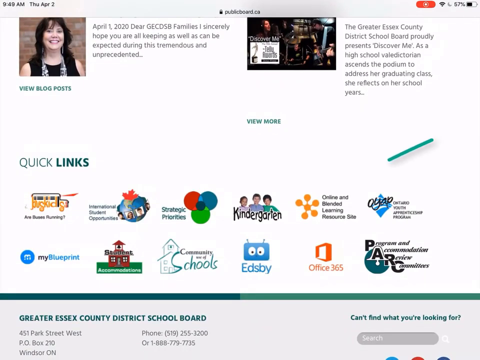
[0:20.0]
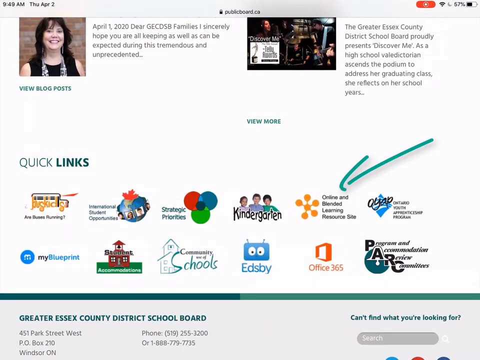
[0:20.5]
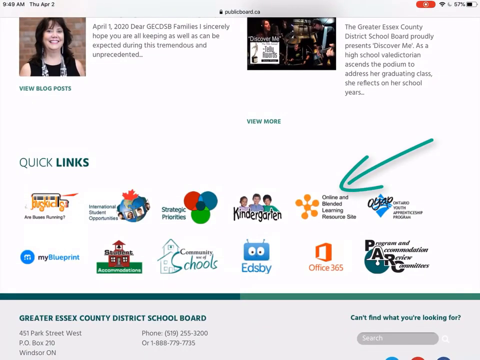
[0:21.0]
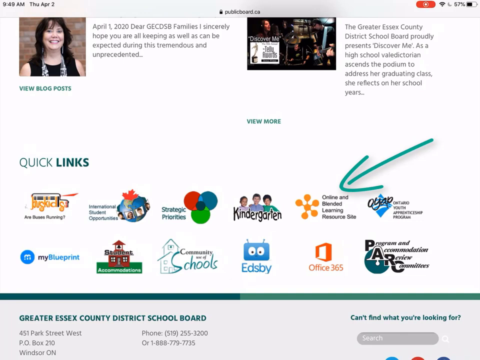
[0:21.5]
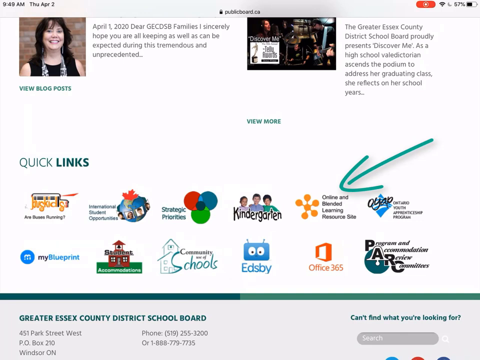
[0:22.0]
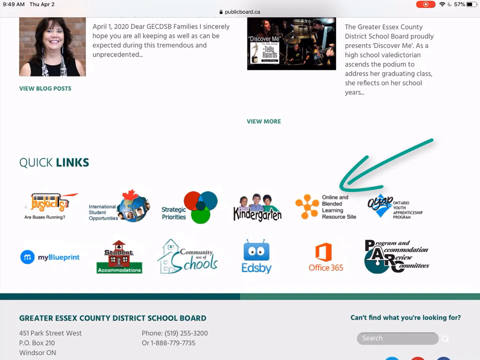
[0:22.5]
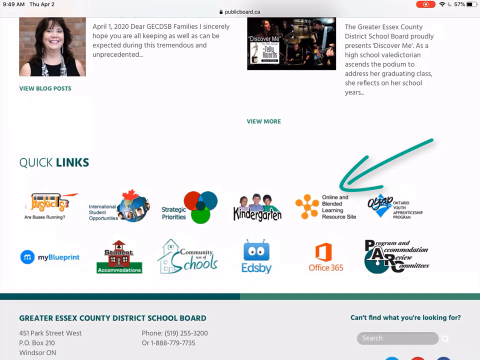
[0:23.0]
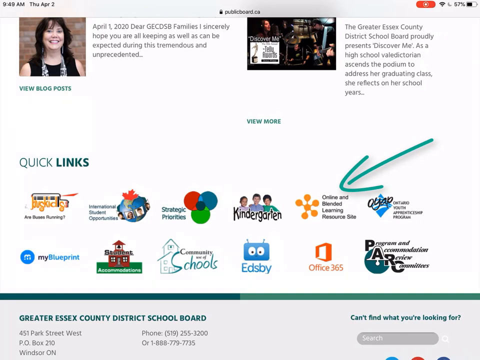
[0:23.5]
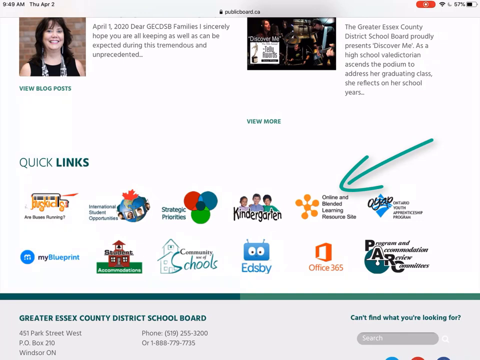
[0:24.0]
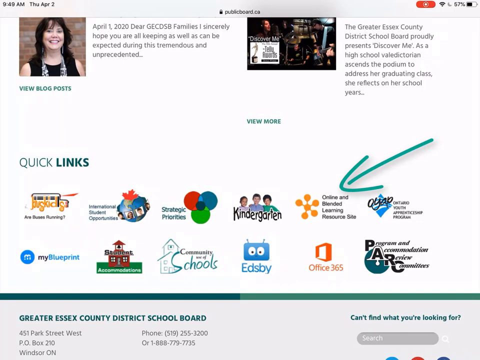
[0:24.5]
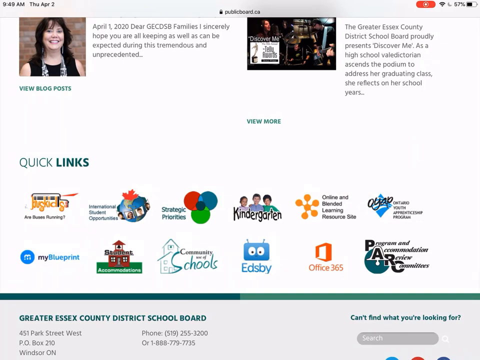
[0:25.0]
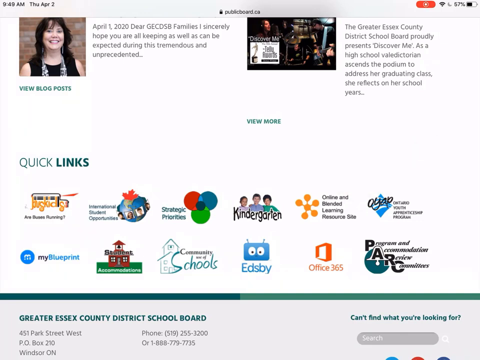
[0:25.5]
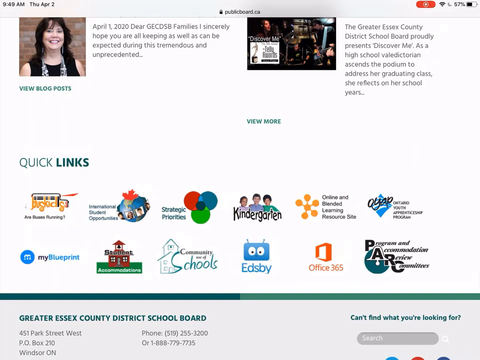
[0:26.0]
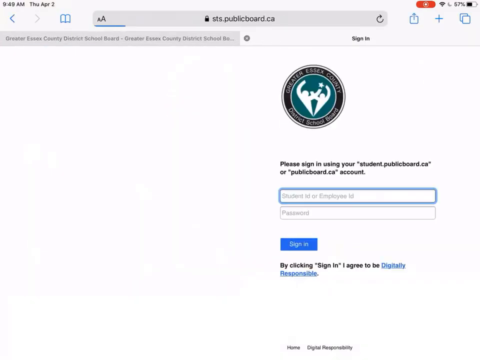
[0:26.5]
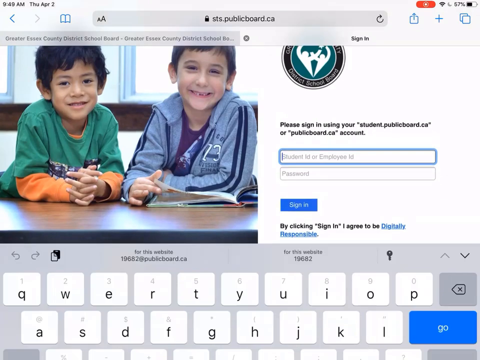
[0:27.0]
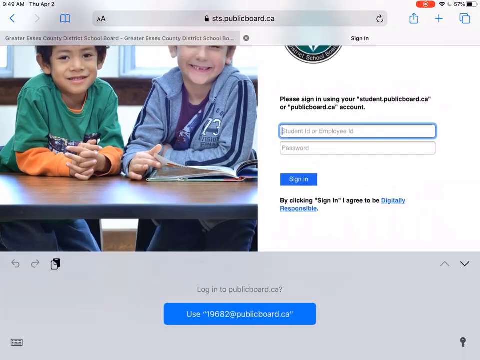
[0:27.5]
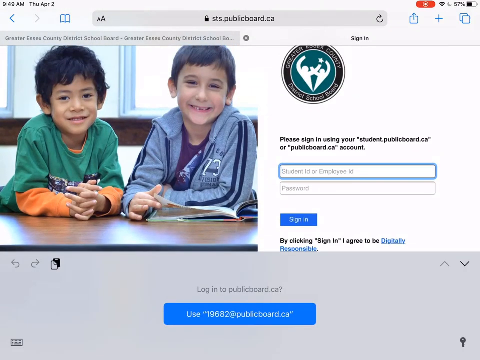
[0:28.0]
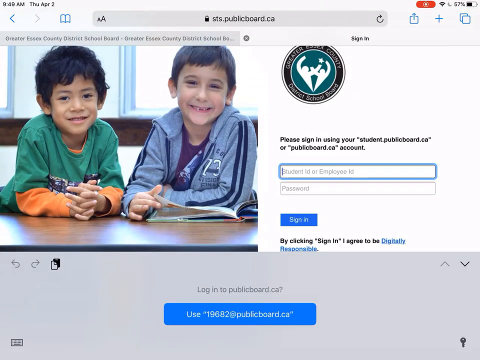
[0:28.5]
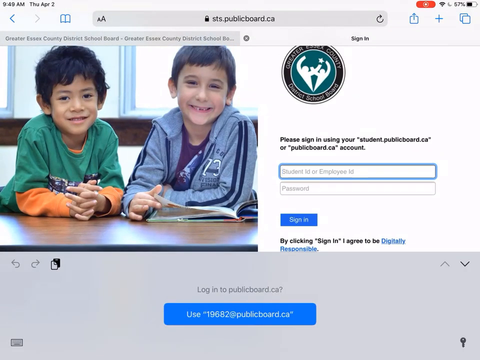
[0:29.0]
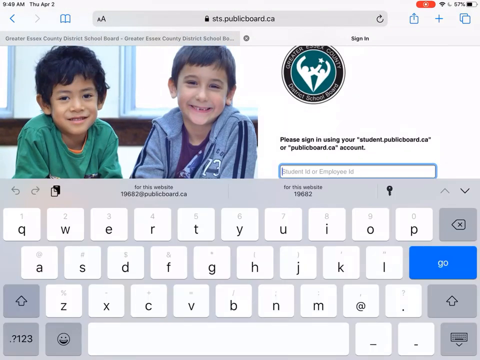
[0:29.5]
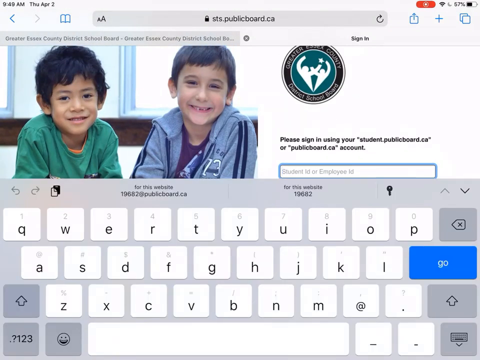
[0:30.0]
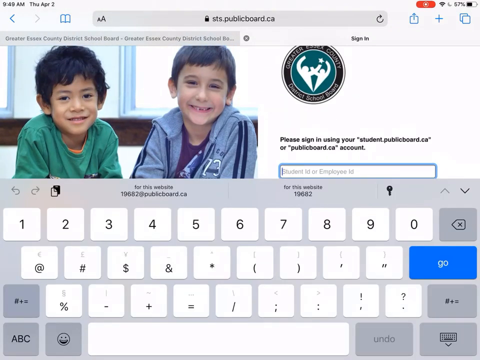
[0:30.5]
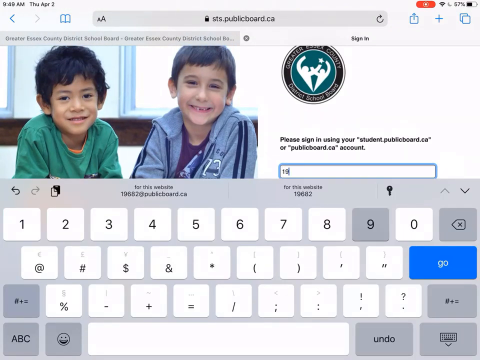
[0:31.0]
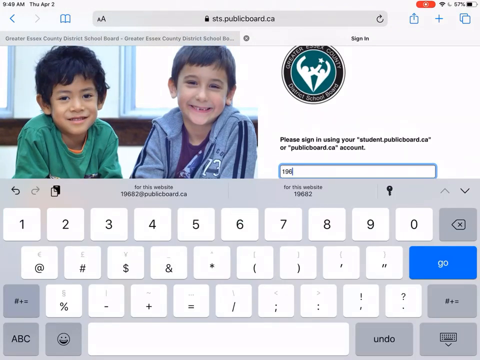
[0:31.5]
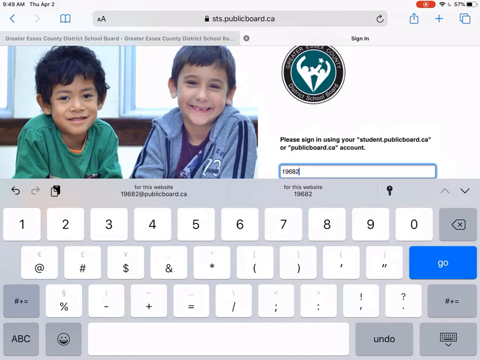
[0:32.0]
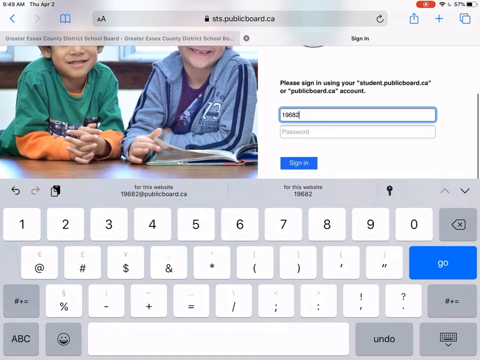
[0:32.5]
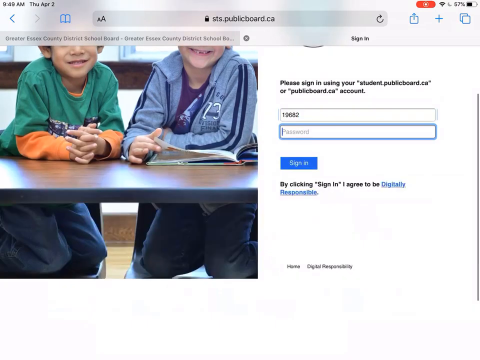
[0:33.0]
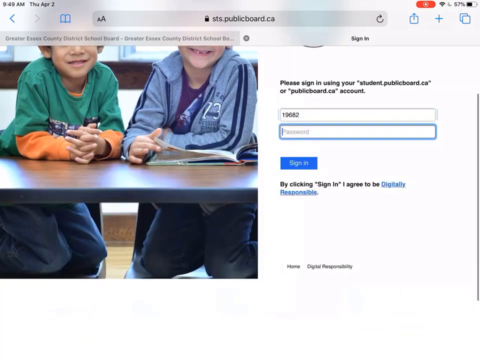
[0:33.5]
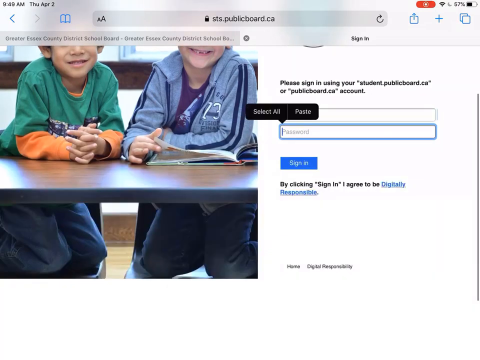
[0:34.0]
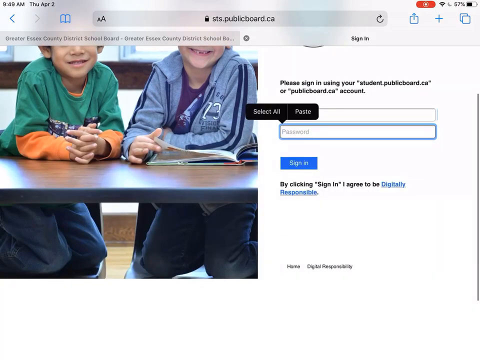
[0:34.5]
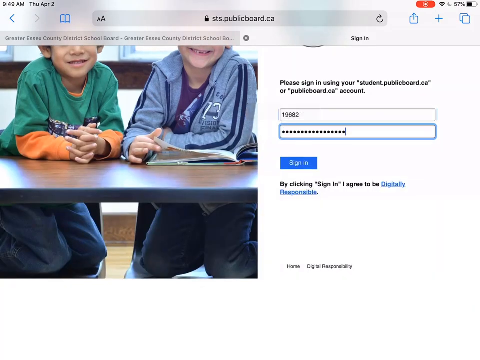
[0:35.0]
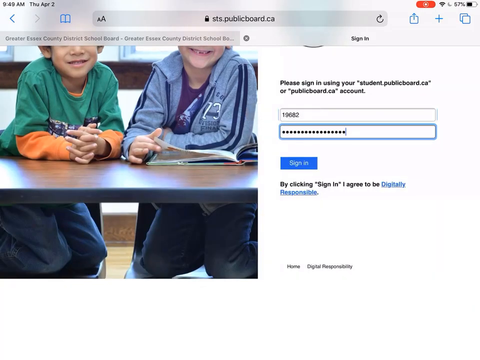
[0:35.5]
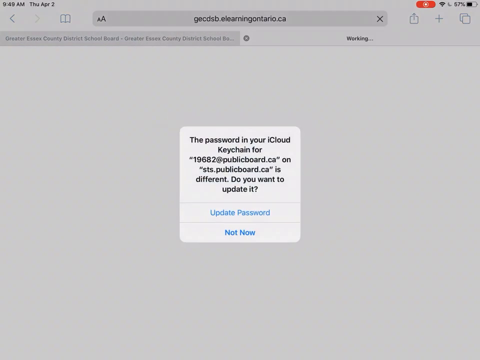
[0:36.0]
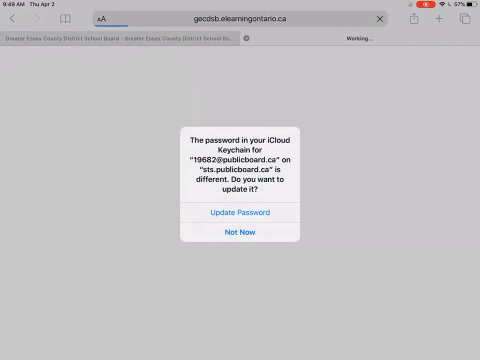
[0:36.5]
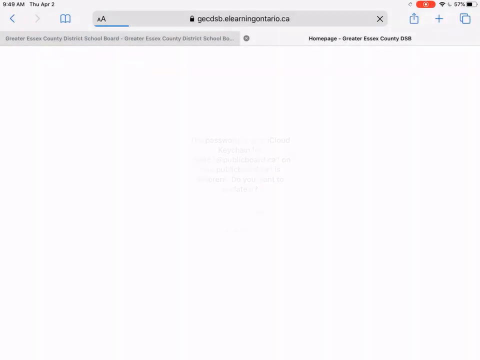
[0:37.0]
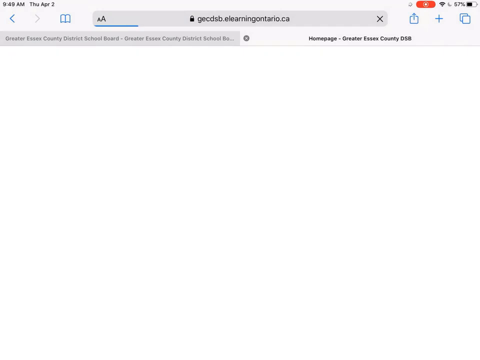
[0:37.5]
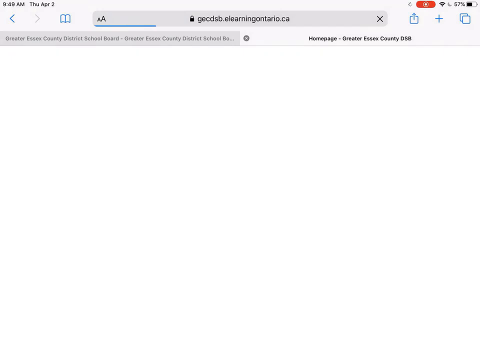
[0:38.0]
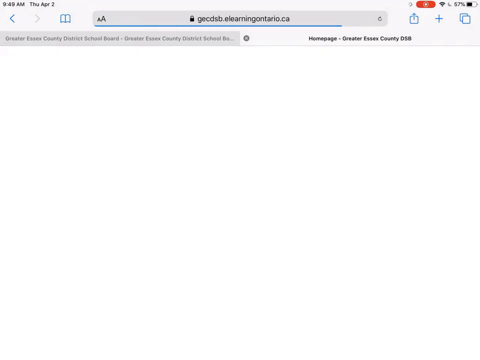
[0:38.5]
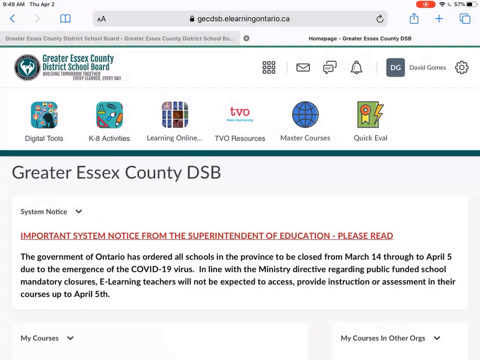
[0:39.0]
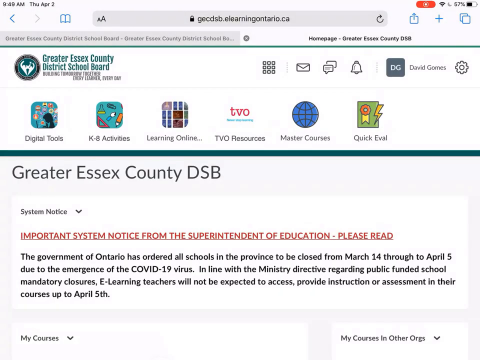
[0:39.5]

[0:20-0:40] A web page for the school is shown, with "publicboard.ca" at the top. On the left-hand side is a headshot of a smiling woman with dark hair. Next to her the text reads "April 1, 2020. Dear GECDSB families, I sincerely hope you are all keeping as well as can be expected during this tremendous and unprecedented." On the right-hand side is another image, with text next to it reading "the Greater Essex County District School Board proudly presents Discover Me. As a high school valedictorian ascends the podium to address her graduating class, she reflects on her school years." At the bottom of the screen there are a dozen quick links, and a green arrow points at "online and blended learning resource site." The image switches to a new page: on the left-hand side two boys smile at the camera, and on the right-hand side it reads "please sign in using your student.publicboard.ca or publicboard.ca account." There is a space for a student ID or employee ID. The person types in the number 19682 and then adds a password.